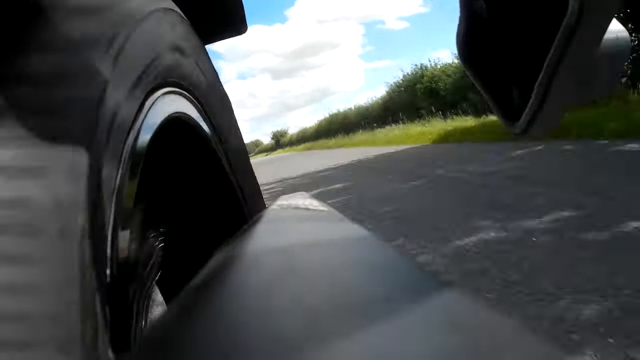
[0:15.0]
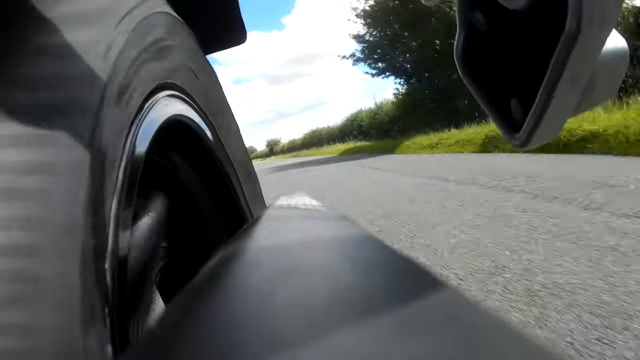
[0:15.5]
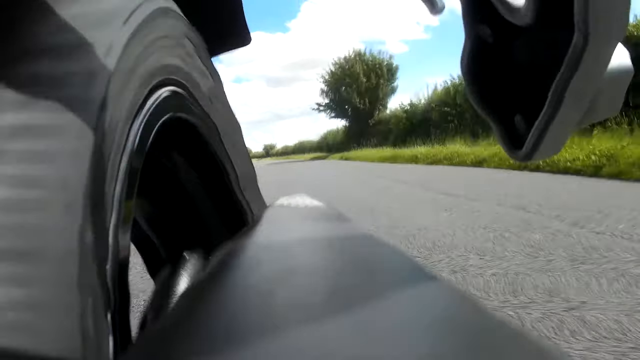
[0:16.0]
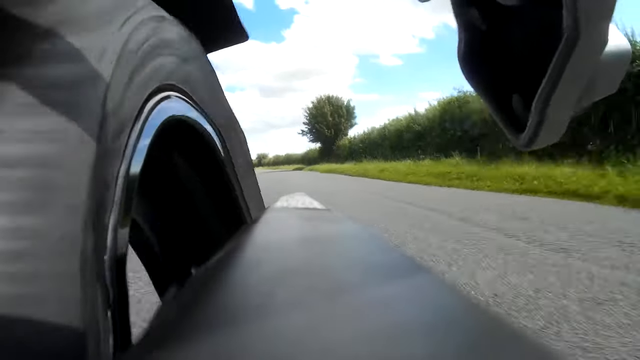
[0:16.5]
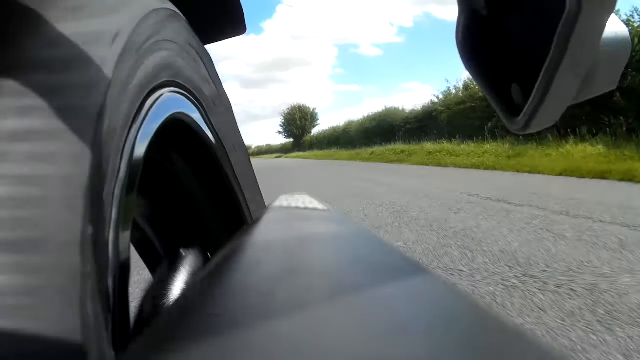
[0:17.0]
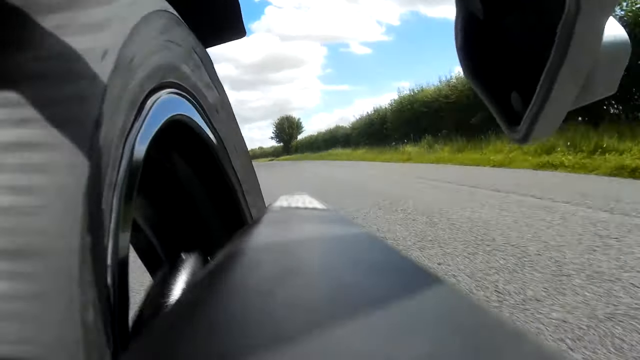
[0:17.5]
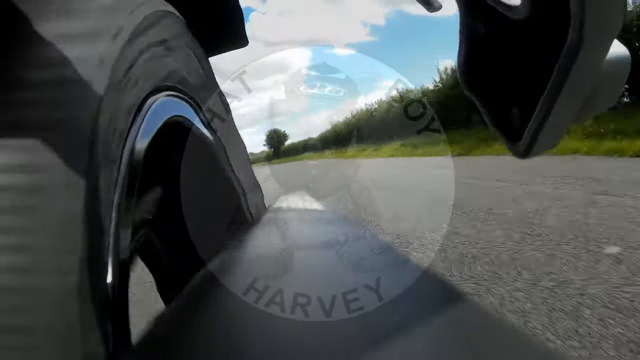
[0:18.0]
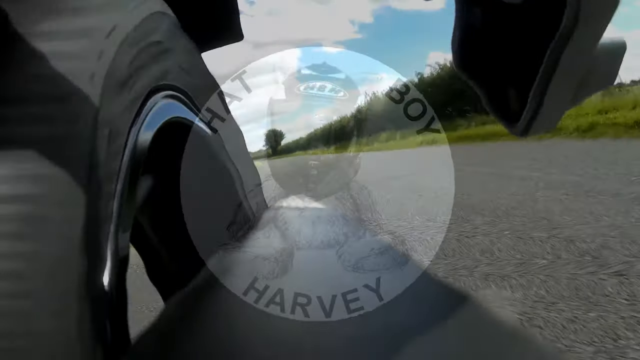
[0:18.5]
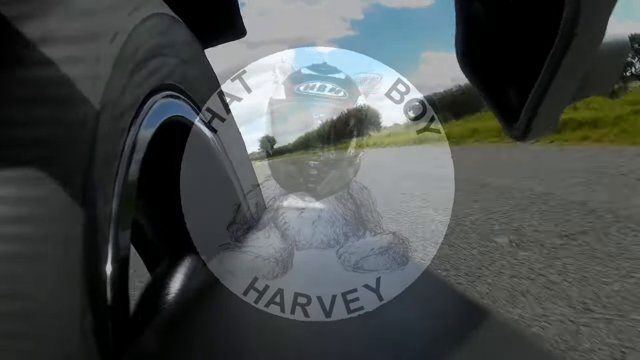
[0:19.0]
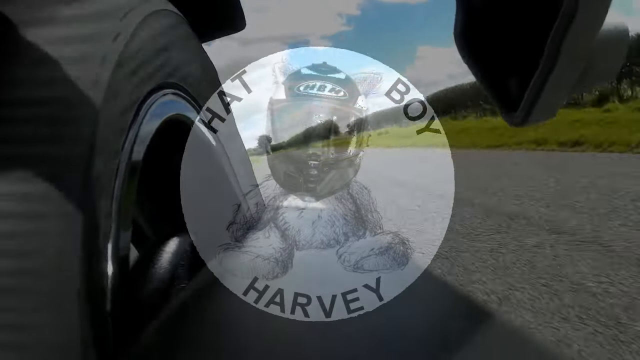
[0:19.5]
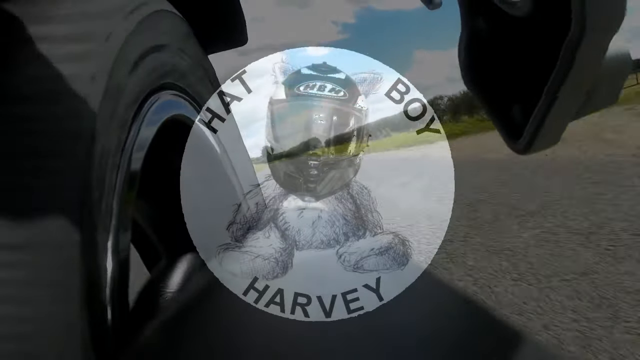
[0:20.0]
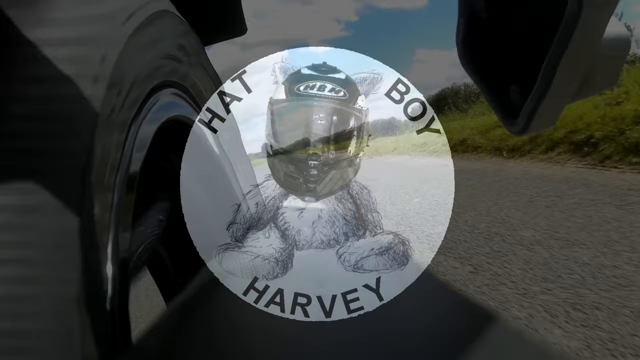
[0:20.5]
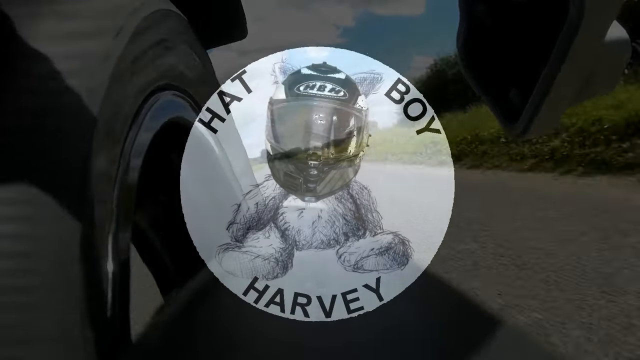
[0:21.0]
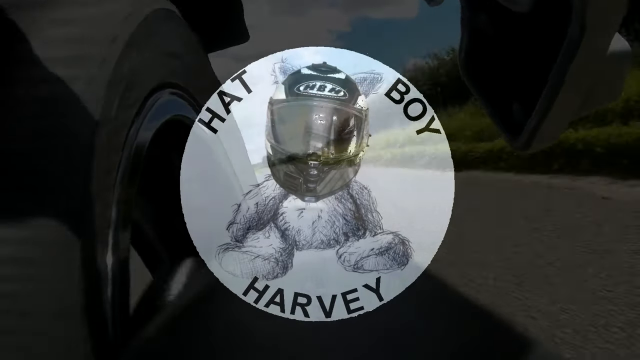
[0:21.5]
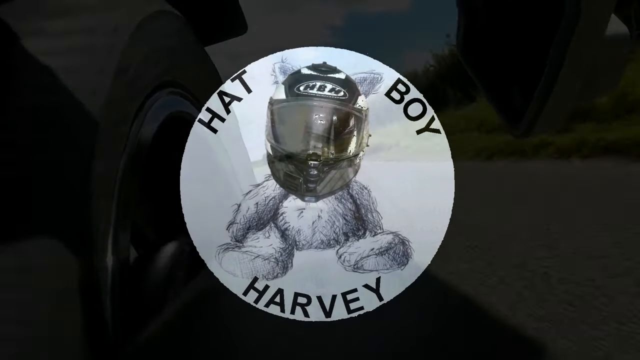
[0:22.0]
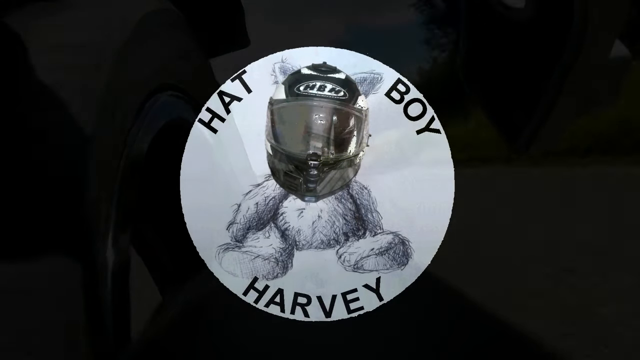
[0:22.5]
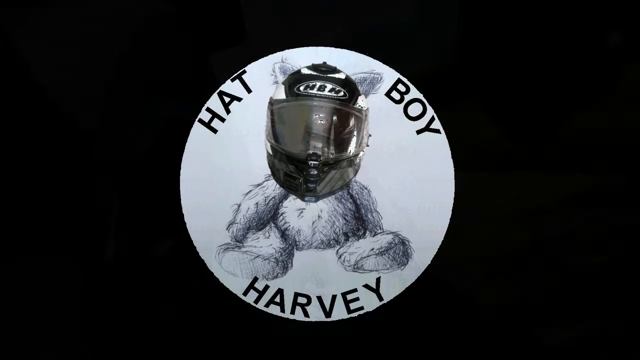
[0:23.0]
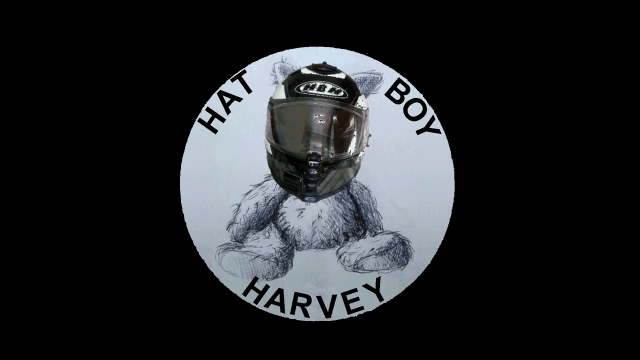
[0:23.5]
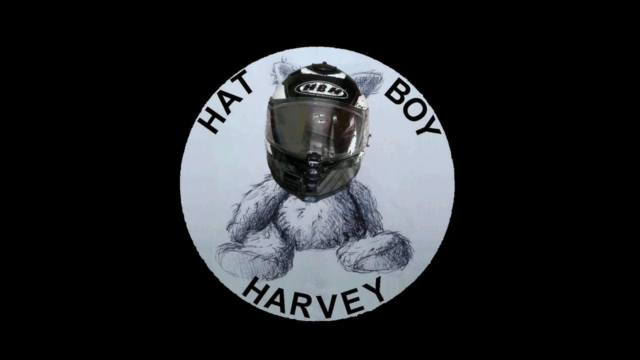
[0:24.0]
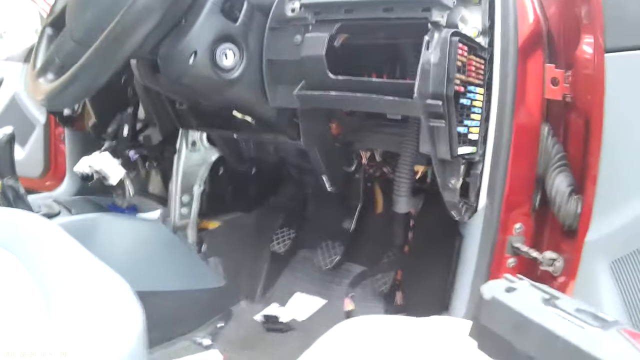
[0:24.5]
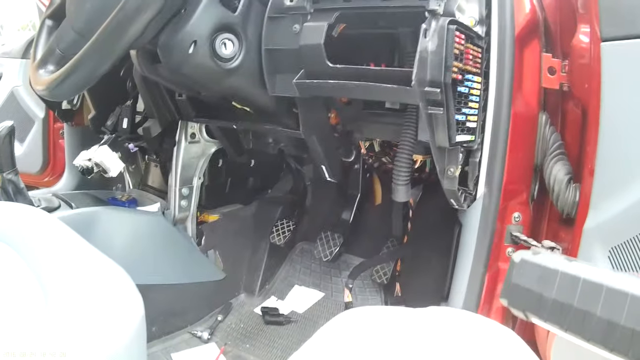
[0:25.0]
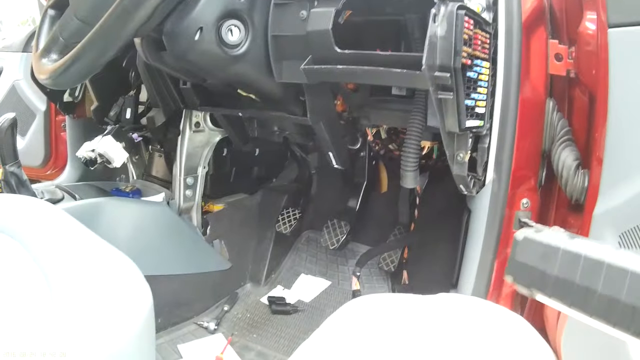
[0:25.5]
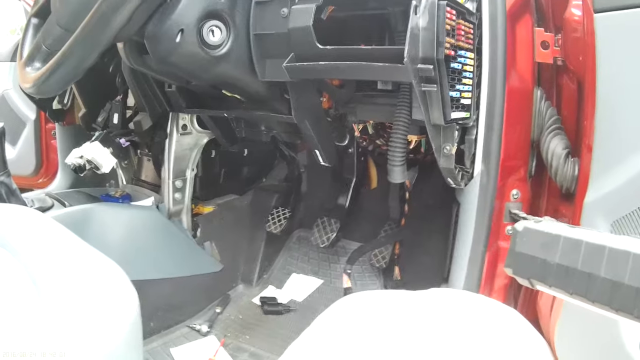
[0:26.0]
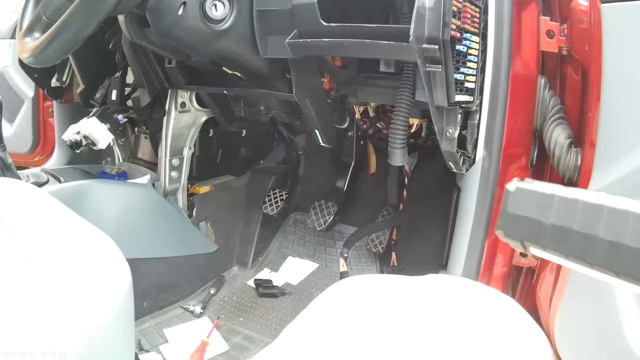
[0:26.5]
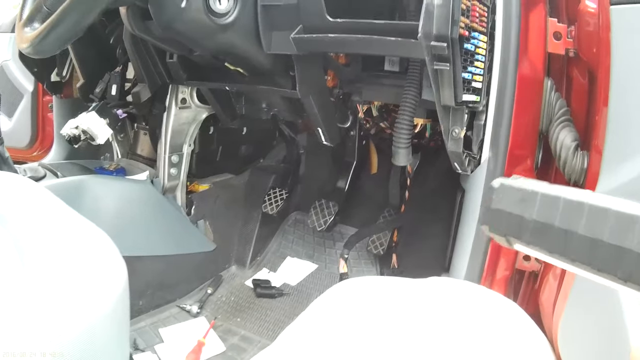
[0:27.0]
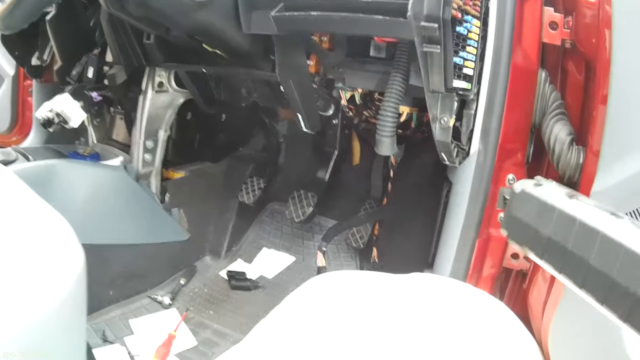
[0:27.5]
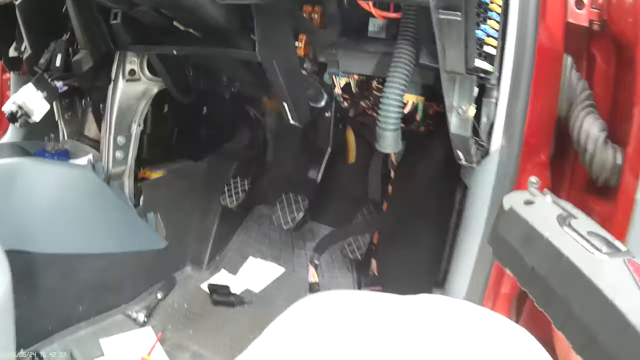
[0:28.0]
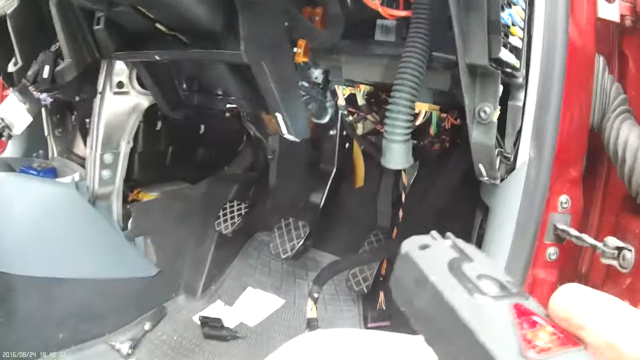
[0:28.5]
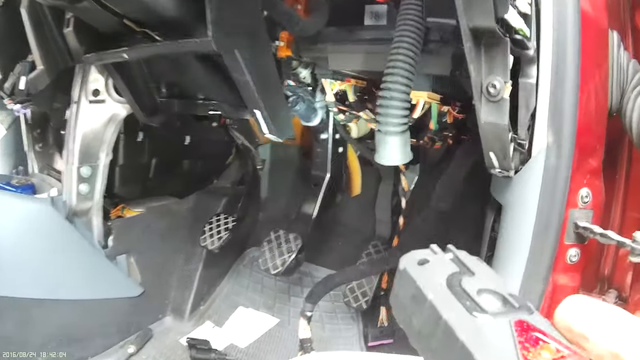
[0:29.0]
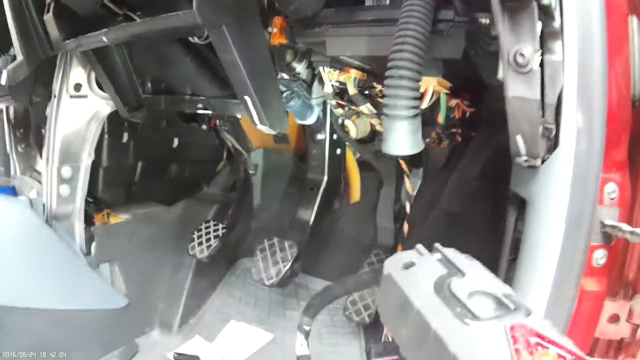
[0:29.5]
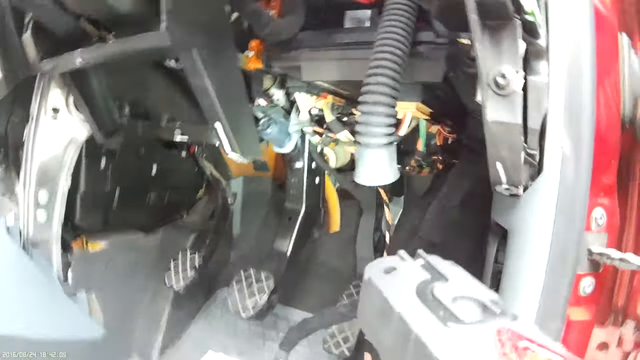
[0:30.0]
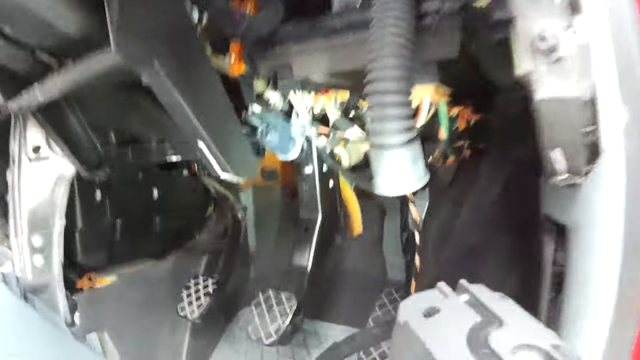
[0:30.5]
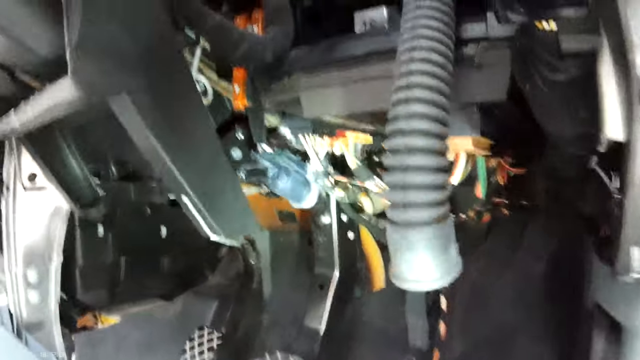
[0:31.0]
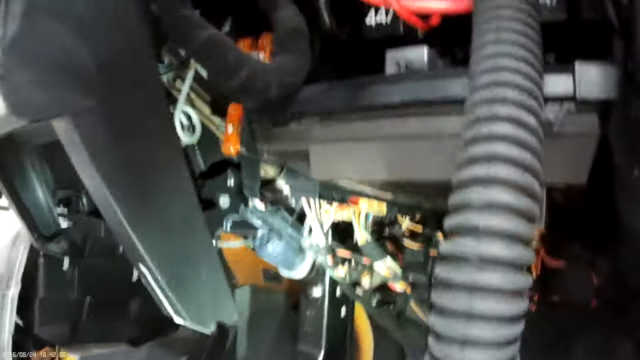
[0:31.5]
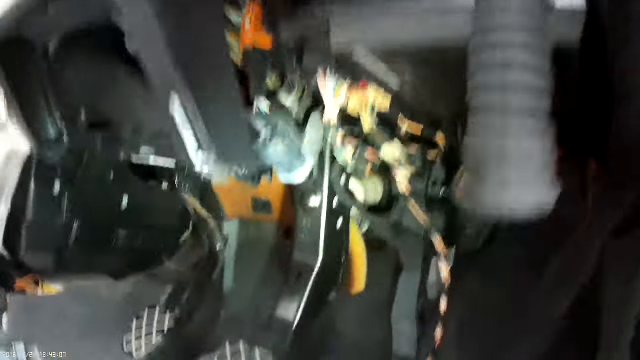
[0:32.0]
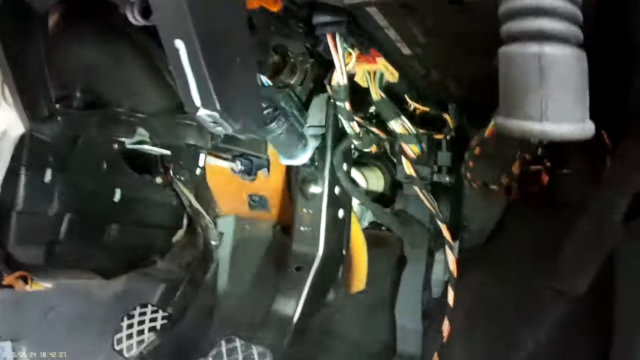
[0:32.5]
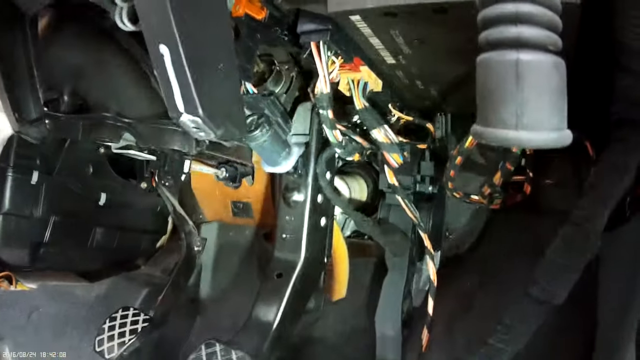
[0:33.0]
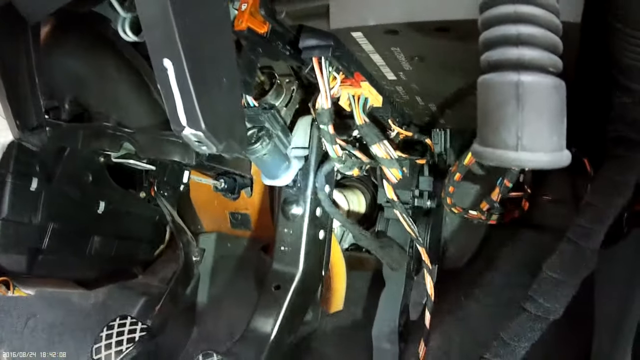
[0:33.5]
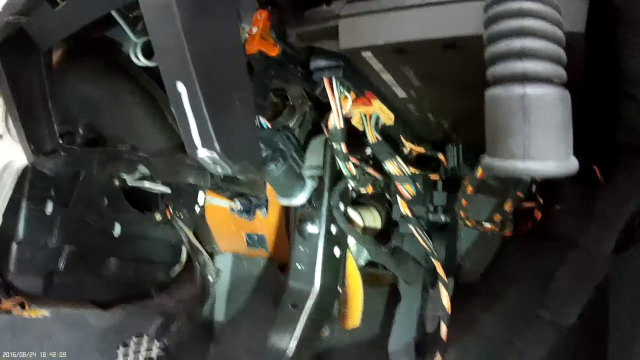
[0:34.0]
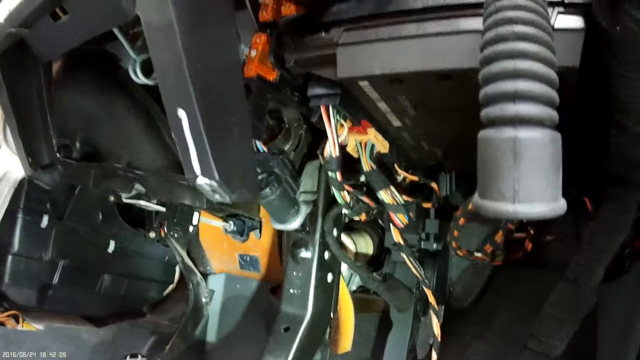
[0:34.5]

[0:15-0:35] The bike continues to run, and then an emblem appears in the middle of the frame, apparently a teddy bear wearing a helmet, named Hat Boy Harvey. The video then moves to more detailed footage under the hood of the bike, apparently of the transmission. It returns to the bike riding, seen from the rear wheel's point of view, then to the emblem, and then to transmission-type wiring under the hood.